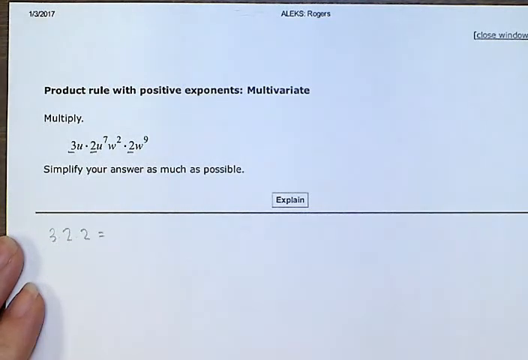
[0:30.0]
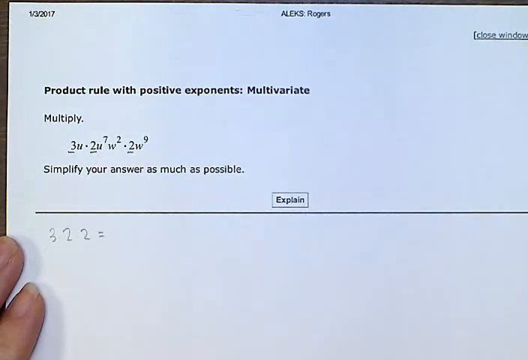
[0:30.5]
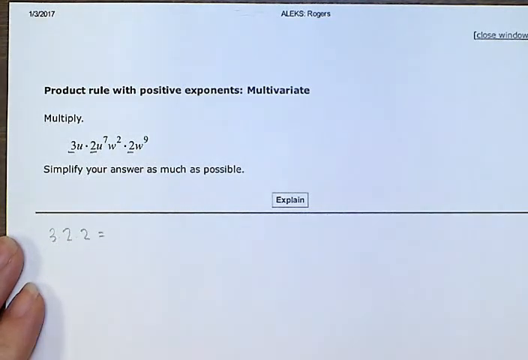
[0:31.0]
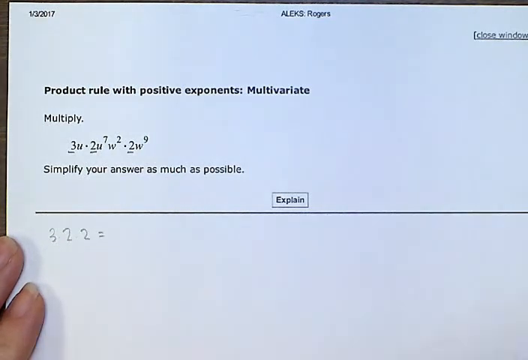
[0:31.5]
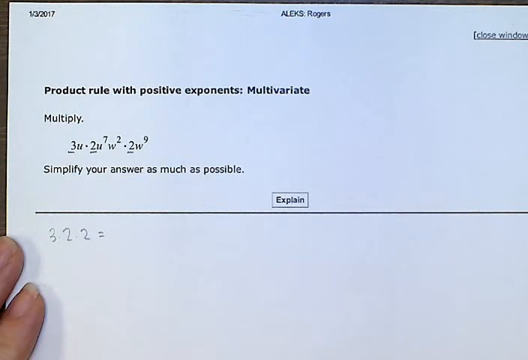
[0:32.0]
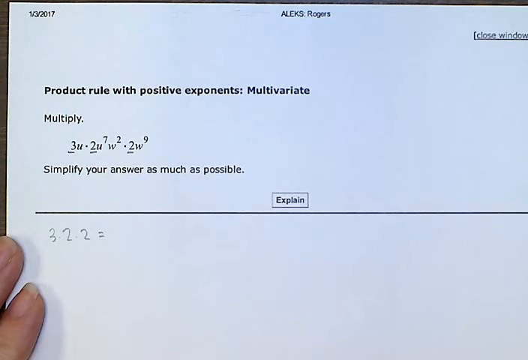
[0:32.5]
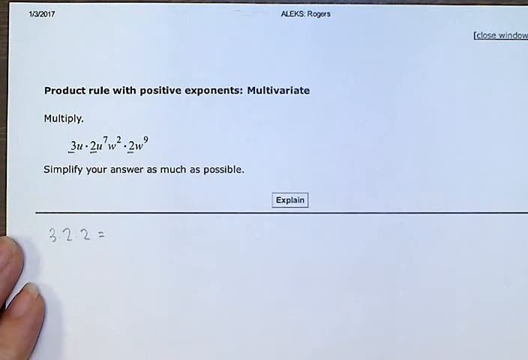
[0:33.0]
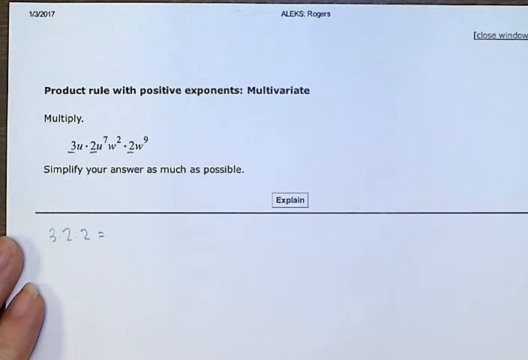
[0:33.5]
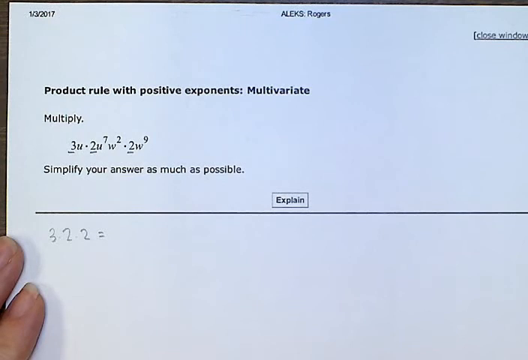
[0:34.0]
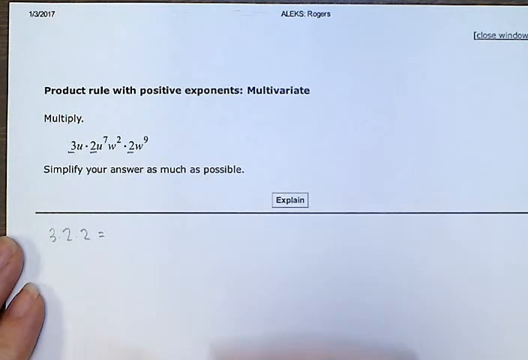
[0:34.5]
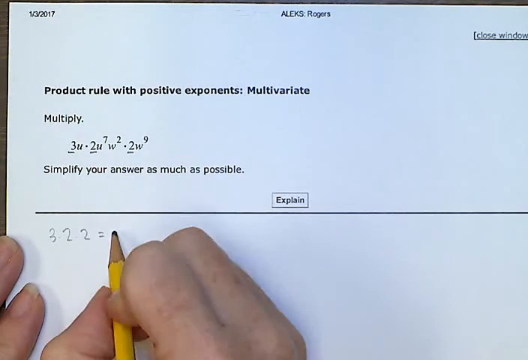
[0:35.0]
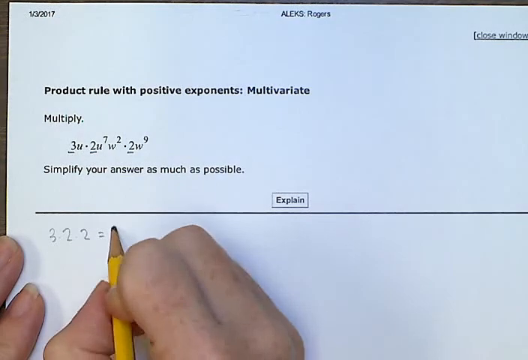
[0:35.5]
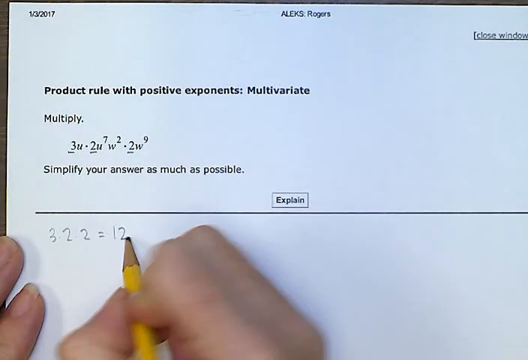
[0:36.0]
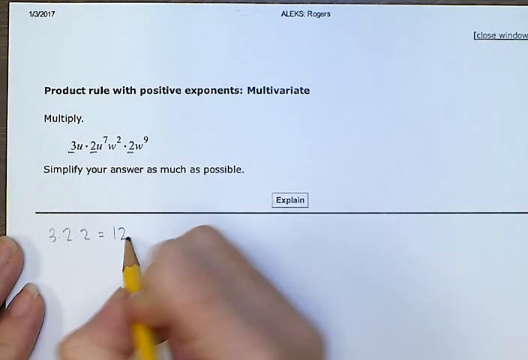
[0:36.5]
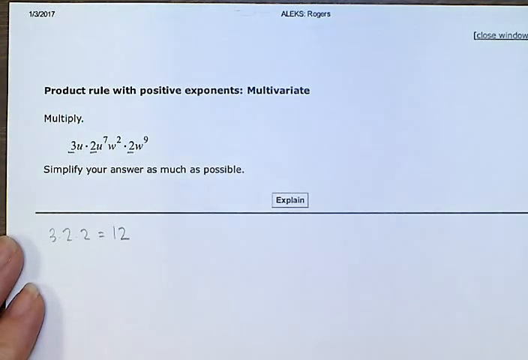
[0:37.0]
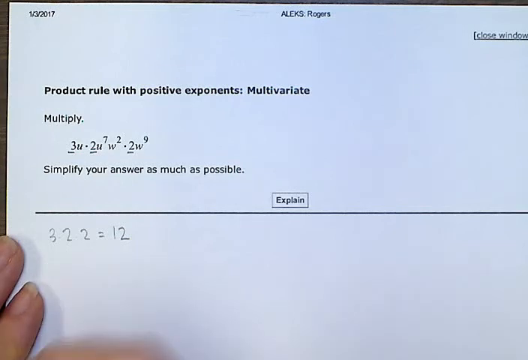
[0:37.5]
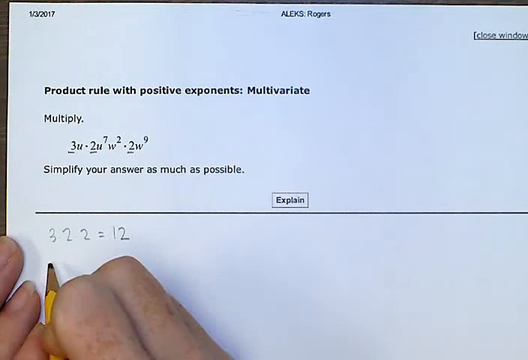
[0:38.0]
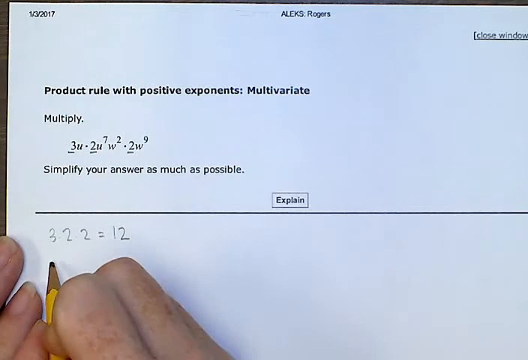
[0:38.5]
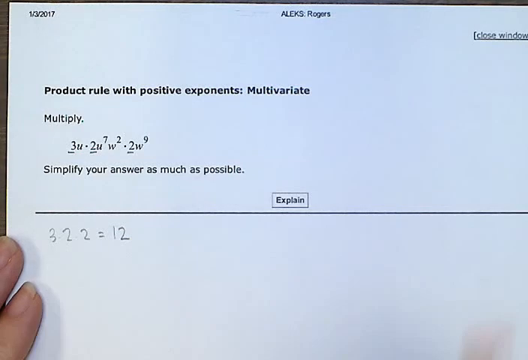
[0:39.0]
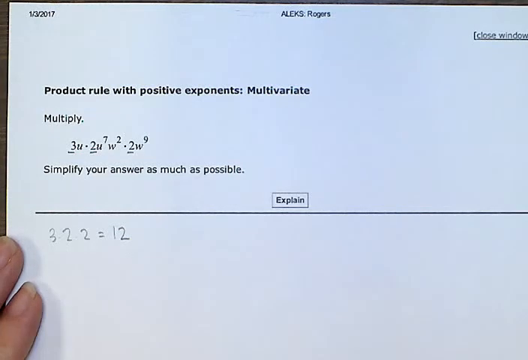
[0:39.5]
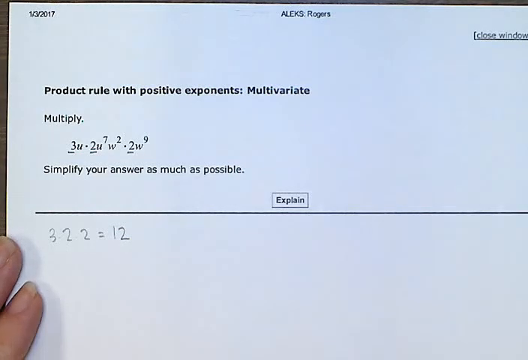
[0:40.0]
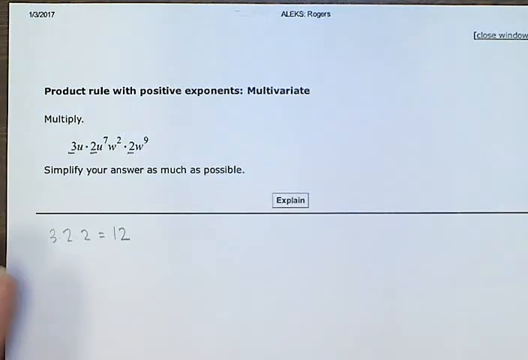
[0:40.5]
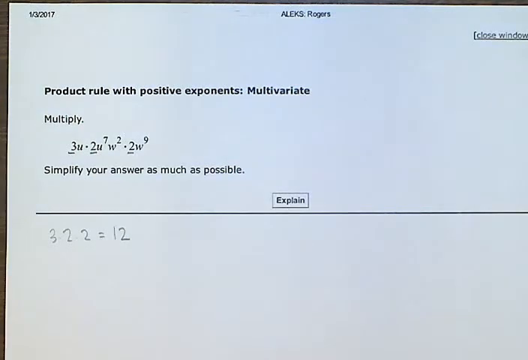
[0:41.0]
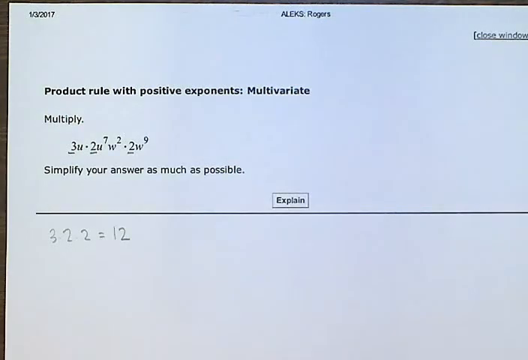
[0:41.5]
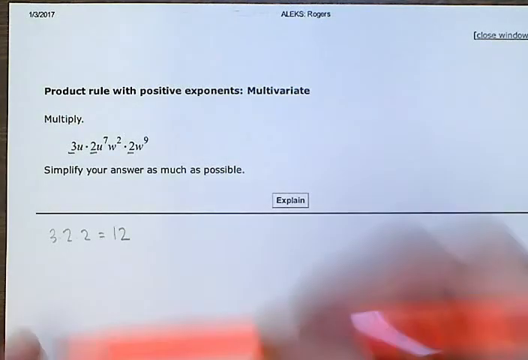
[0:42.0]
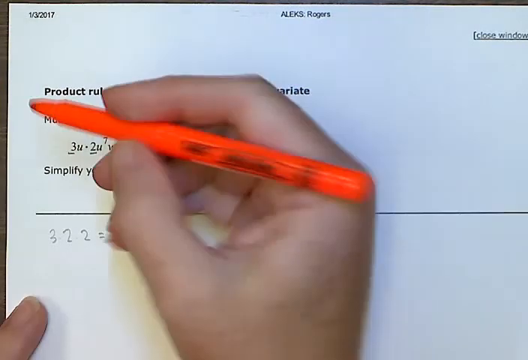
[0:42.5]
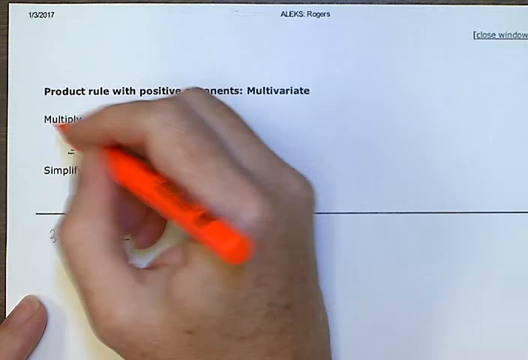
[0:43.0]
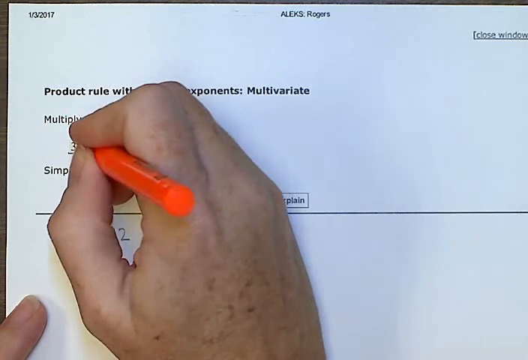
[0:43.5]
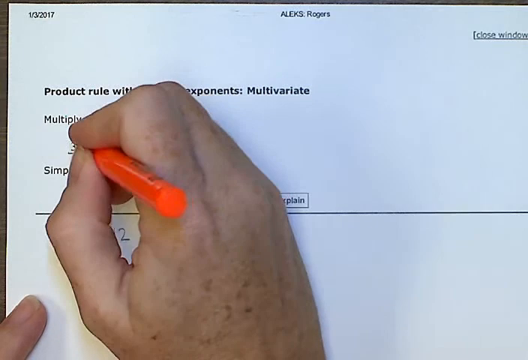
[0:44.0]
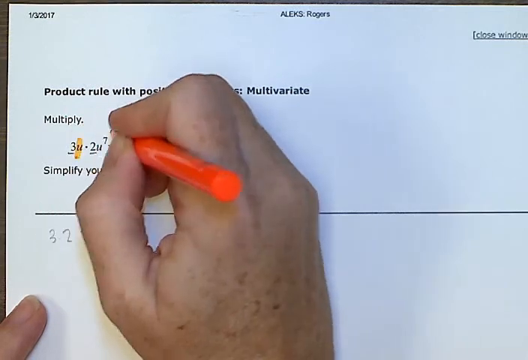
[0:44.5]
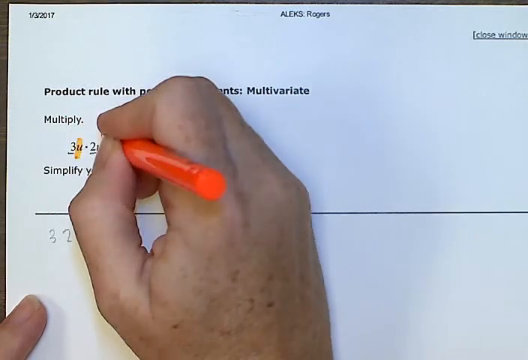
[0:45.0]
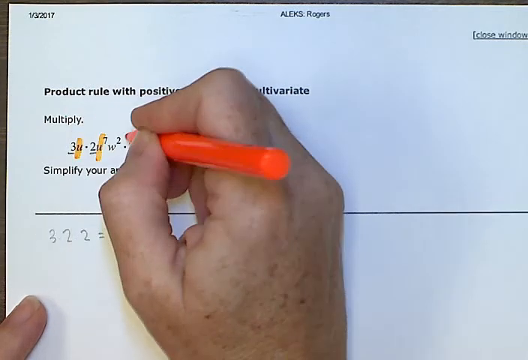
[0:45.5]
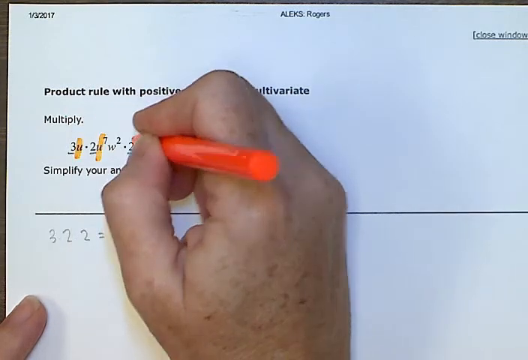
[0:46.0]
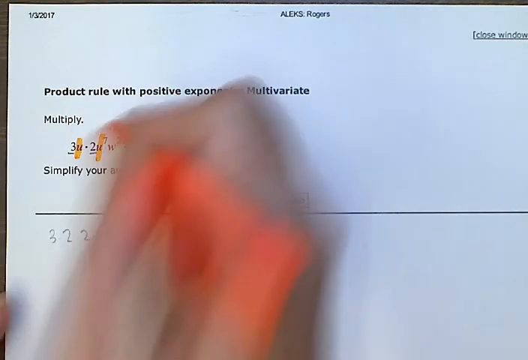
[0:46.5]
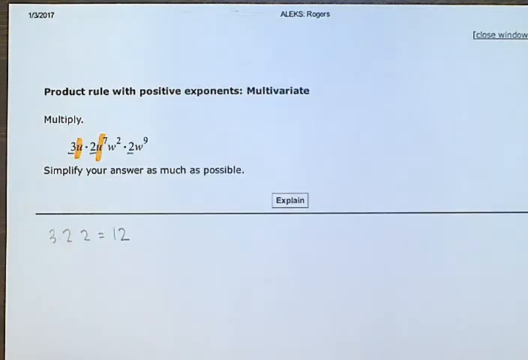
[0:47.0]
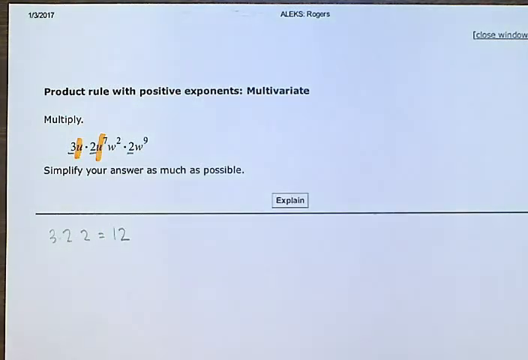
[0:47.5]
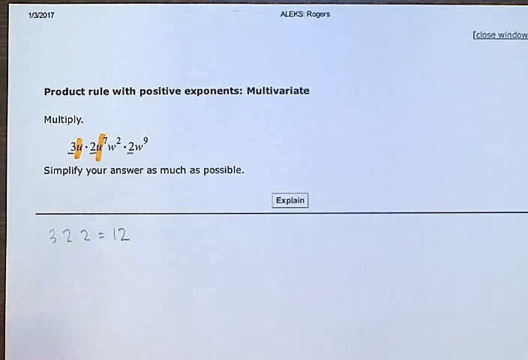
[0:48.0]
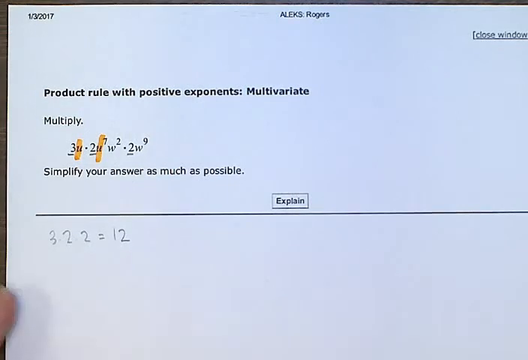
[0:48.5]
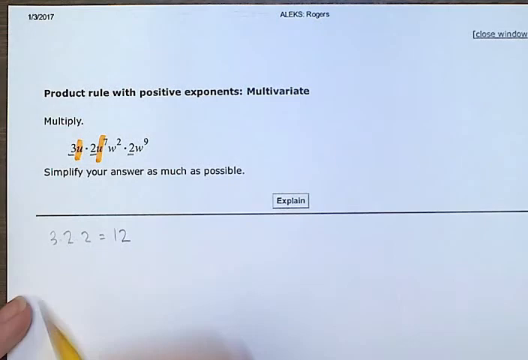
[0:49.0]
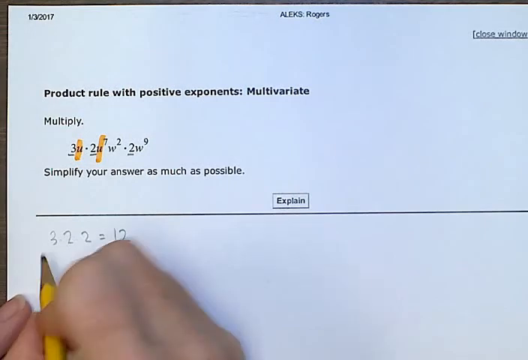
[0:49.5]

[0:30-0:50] The person has written 322 equals on the paper. Their hand is out of view on the right side, while their two fingers are still visible in the left corner. The pen reappears and they write the number 12 beside 322 equals. Their hand keeps appearing and going back down, and then they are holding a different coloured pen, an orange marker pen, gripped with their thumb and two fingers. One finger of their left hand is still visible in the bottom left-hand corner. They draw a vertical line down the sum underneath the word "multiply", drawing the line over the U twice. Then they move their hand from the middle section on the left down to the bottom right-hand corner until it disappears out of the shot.